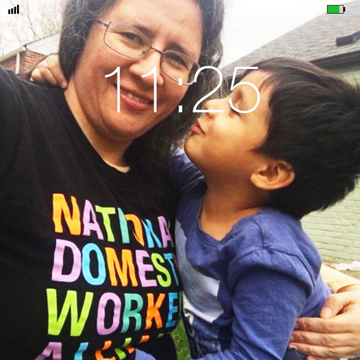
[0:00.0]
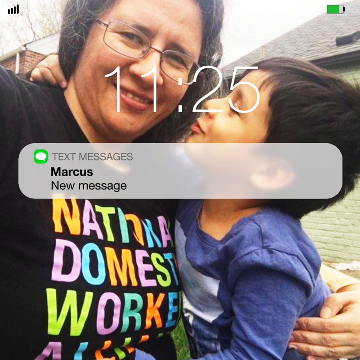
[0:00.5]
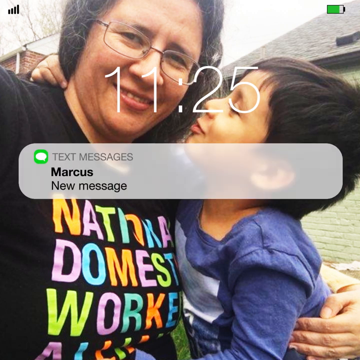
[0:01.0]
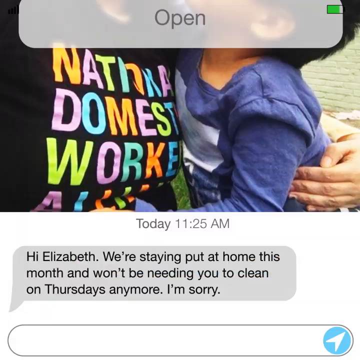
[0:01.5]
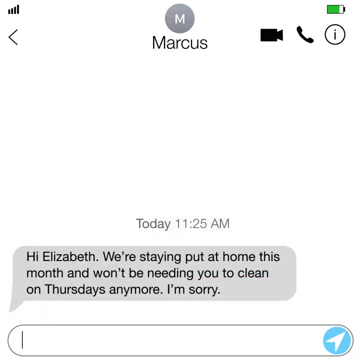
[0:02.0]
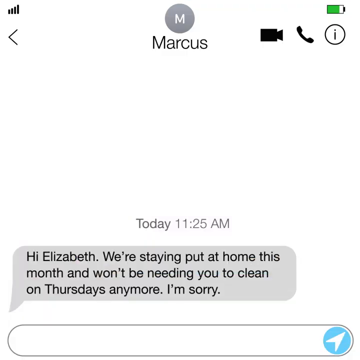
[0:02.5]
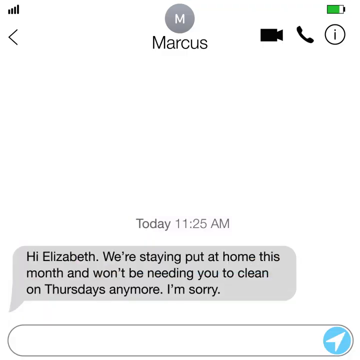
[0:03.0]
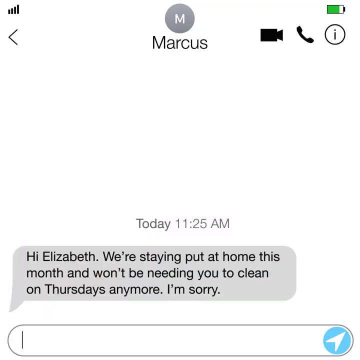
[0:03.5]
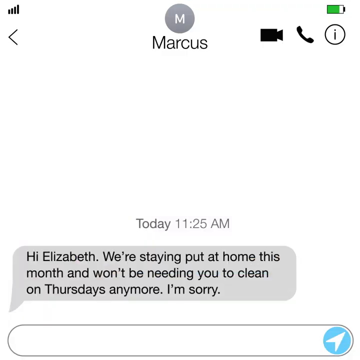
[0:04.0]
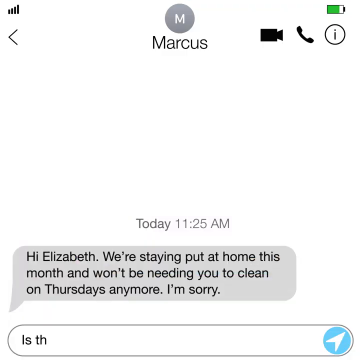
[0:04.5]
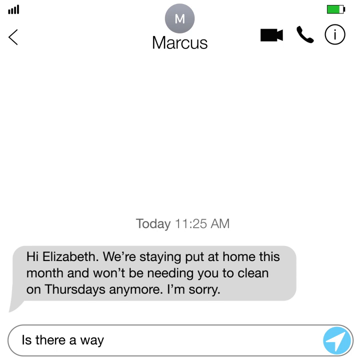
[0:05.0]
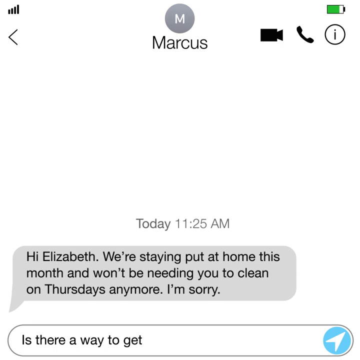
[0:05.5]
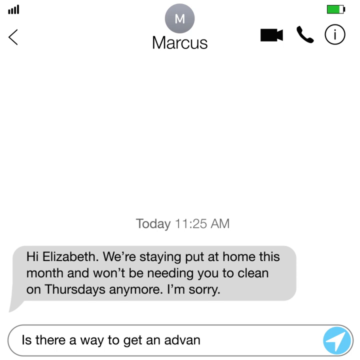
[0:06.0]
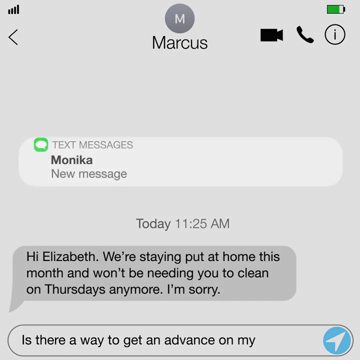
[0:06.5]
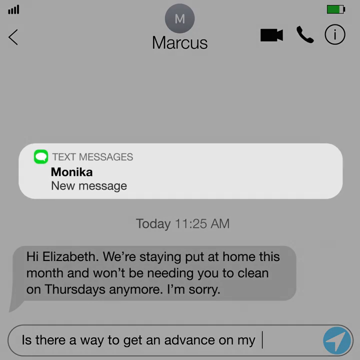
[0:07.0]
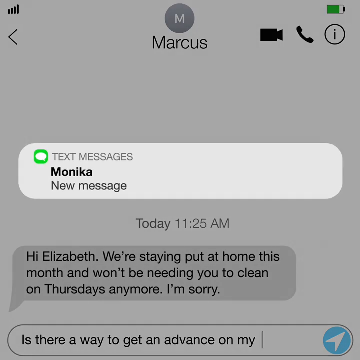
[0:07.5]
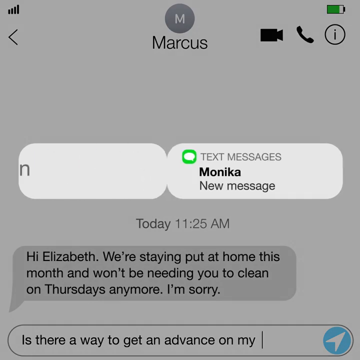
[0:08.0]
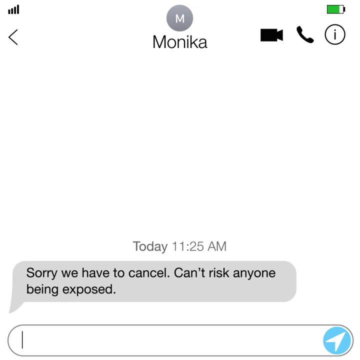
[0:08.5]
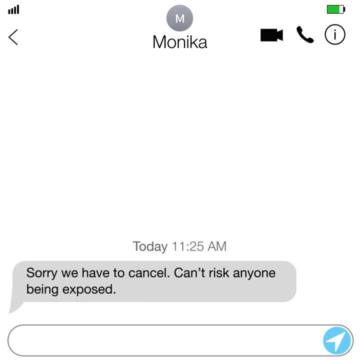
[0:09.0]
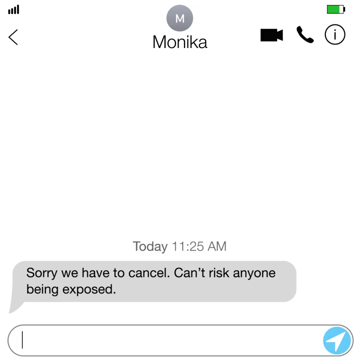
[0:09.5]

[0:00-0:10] Two people stand directly in front of the camera. One is an elderly woman of Hispanic descent with gray hair and glasses, wearing a black shirt with text on the front in rainbow colors, including orange, purple, green and blue. She holds a small child, also of Hispanic descent, who wears a blue shirt with a silver vinyl symbol on the front. The two of them are embracing. They are in the backyard of a house, and the season is winter. The sky is a very bright white, and there is a leafless tree behind two houses. A red brick house is behind the two people, and there is also a second brick house, which is green.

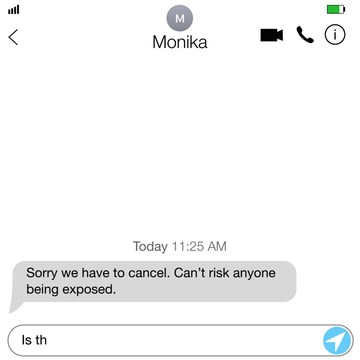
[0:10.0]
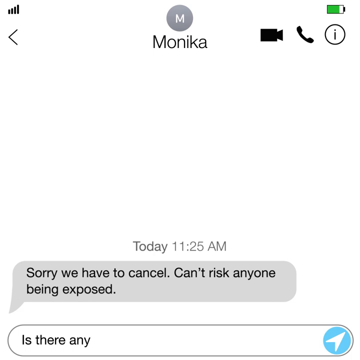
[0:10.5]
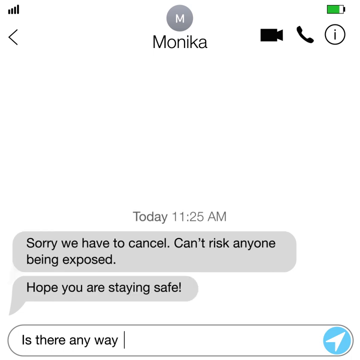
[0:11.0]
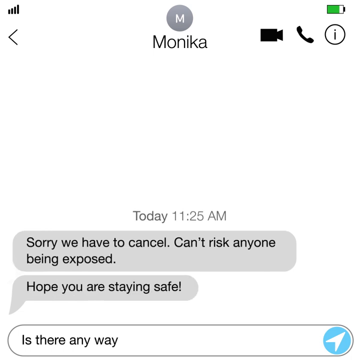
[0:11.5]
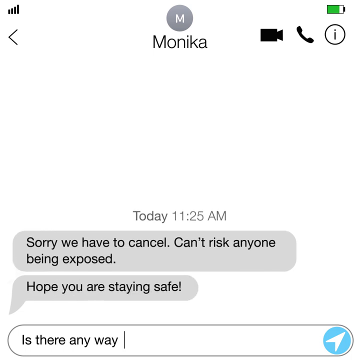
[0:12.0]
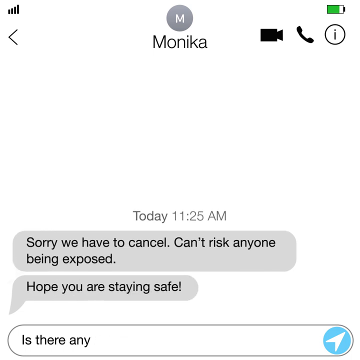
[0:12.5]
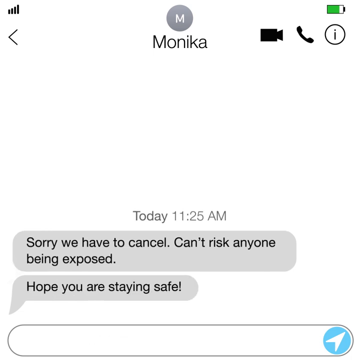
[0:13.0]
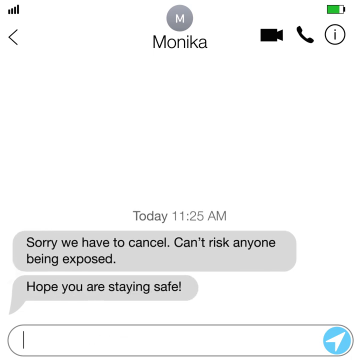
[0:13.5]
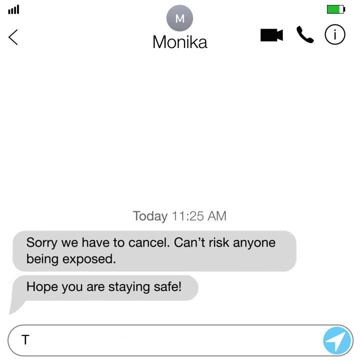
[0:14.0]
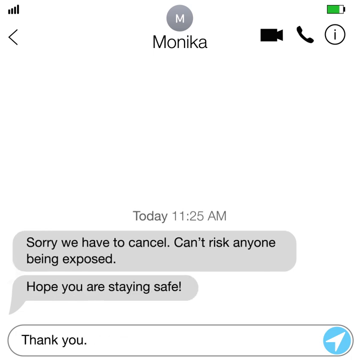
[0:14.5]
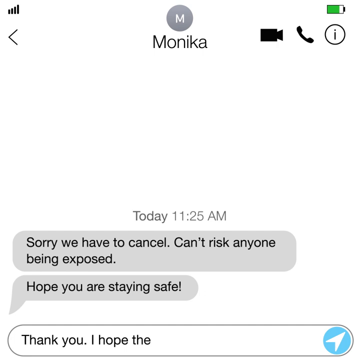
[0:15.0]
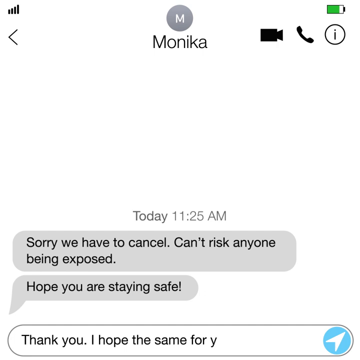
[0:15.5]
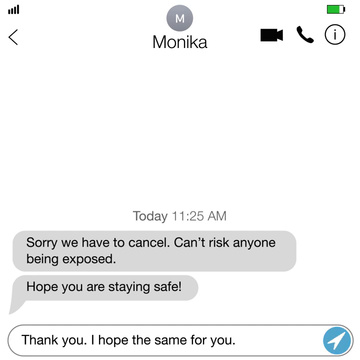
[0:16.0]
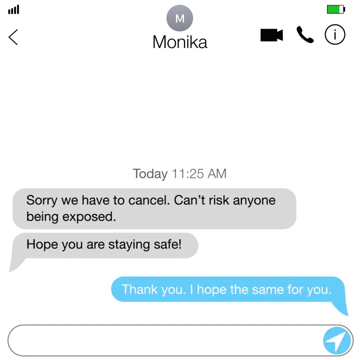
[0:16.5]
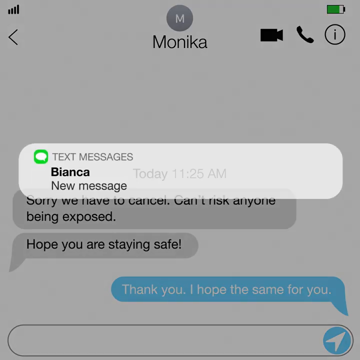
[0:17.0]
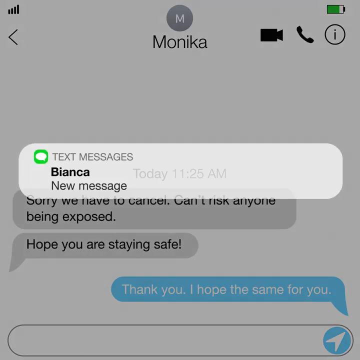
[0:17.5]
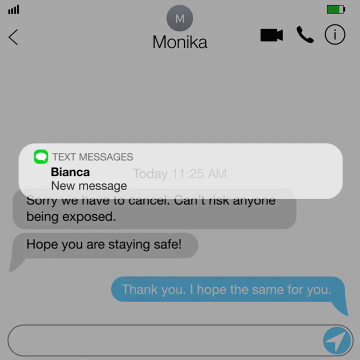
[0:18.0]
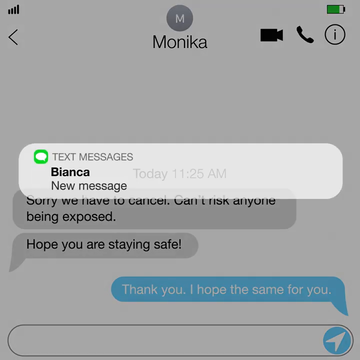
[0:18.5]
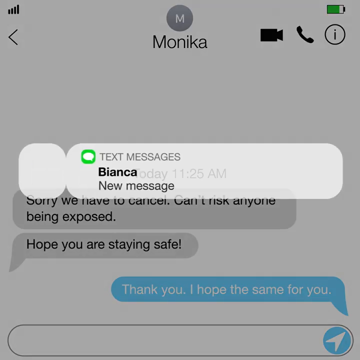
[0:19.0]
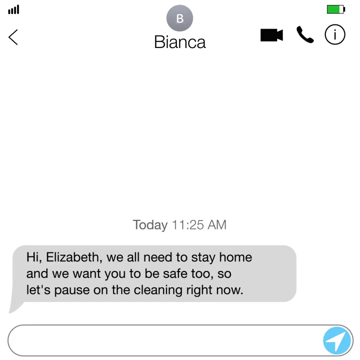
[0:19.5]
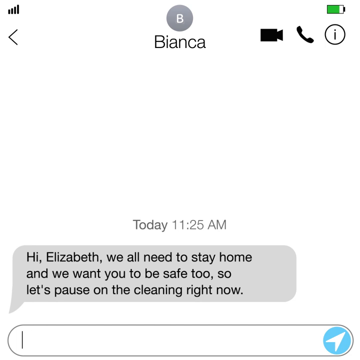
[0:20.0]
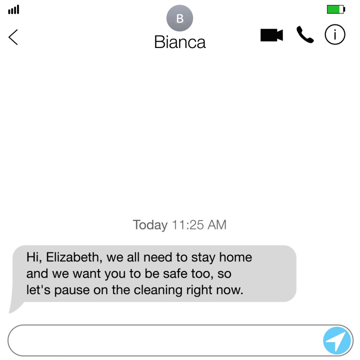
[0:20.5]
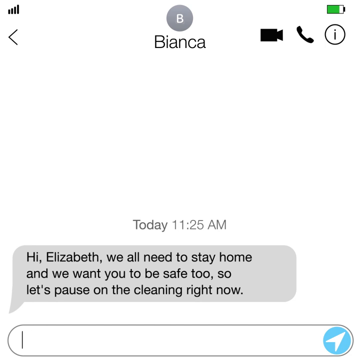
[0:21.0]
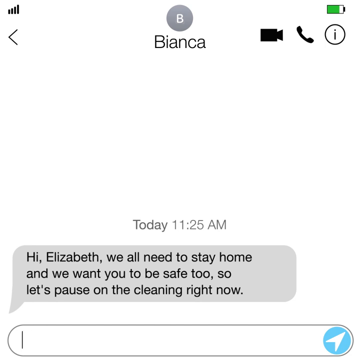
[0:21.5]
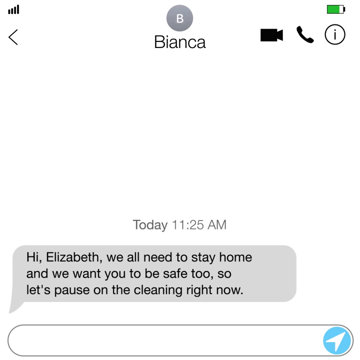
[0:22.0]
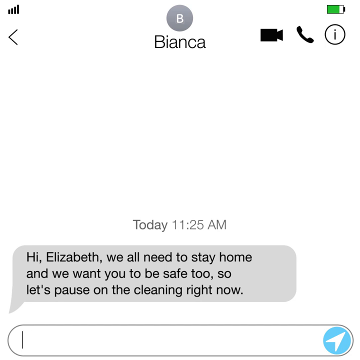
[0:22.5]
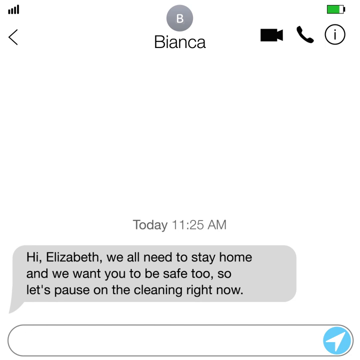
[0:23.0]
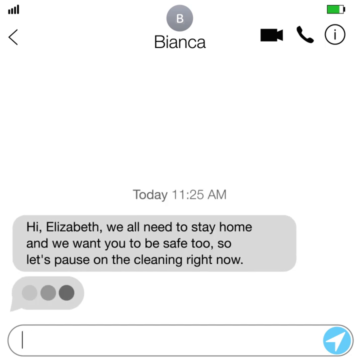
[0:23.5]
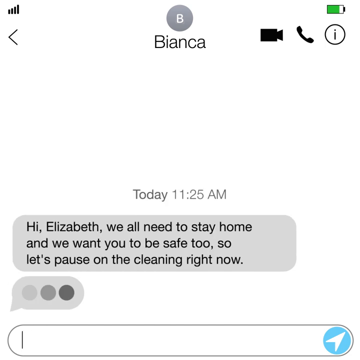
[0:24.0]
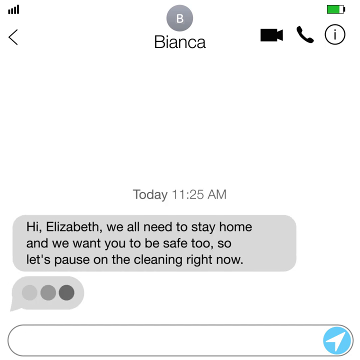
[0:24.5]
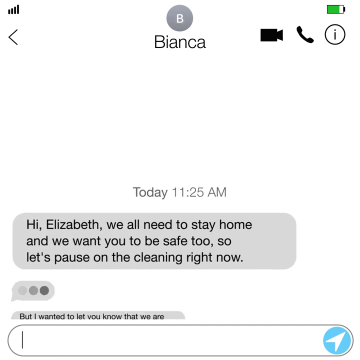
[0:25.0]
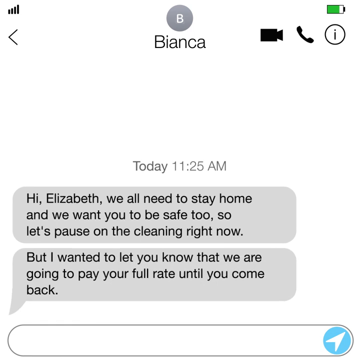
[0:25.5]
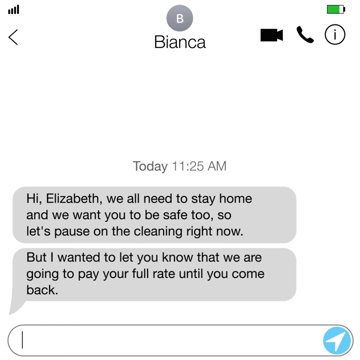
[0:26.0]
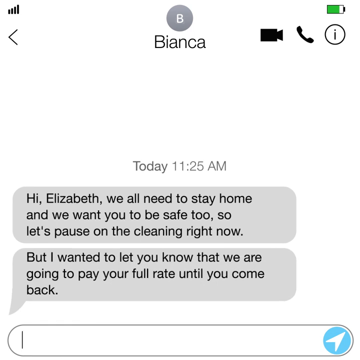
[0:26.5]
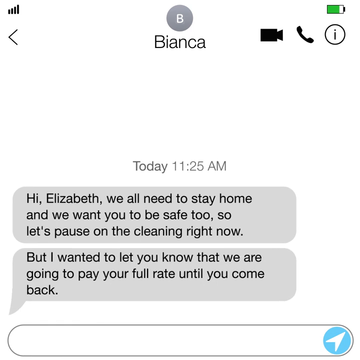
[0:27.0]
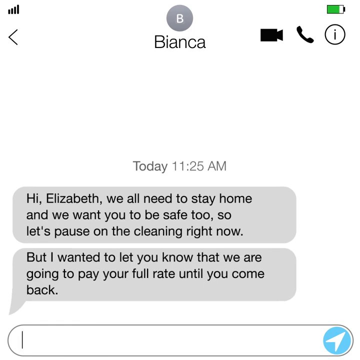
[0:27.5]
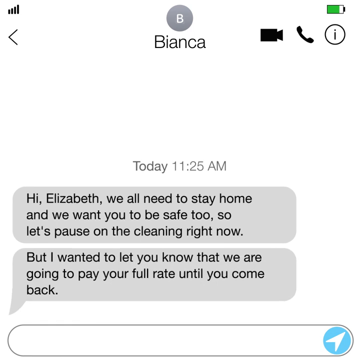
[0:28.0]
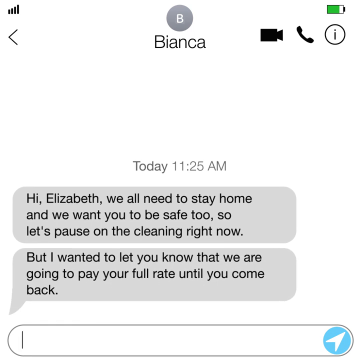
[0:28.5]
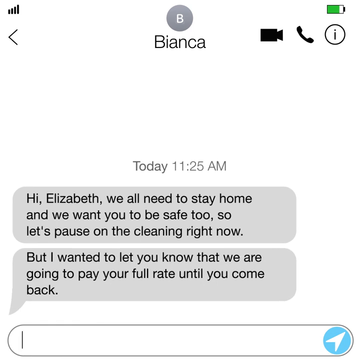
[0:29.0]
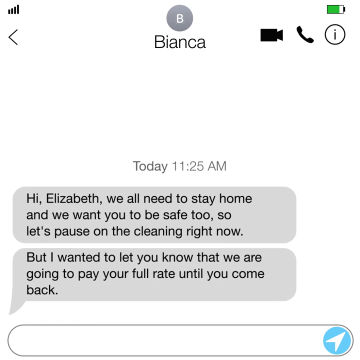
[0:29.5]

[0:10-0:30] A blank white phone screen appears, with text around its borders. A reception symbol is in the top left corner. In the middle of the top of the screen is a gray circle with a white "M", and beneath it is "Monica". To the right are an all-black camera symbol and an all-black phone symbol, and a battery indicator, green with black outlines, shows the battery is mostly full. At the bottom, gray text reads "today 11:25 a.m.", and beneath it is a gray text bubble with black text reading "sorry we have to cancel can't risk anyone being exposed".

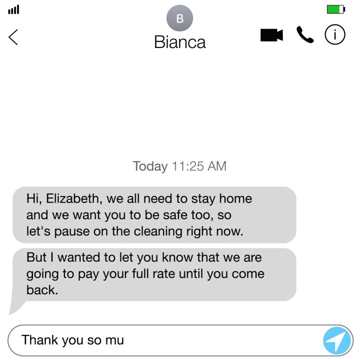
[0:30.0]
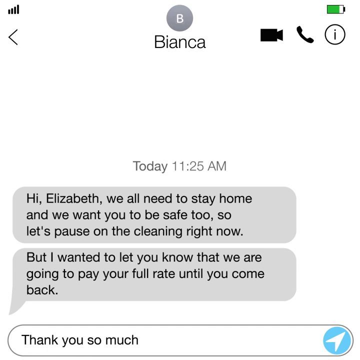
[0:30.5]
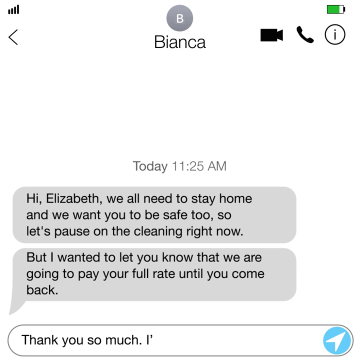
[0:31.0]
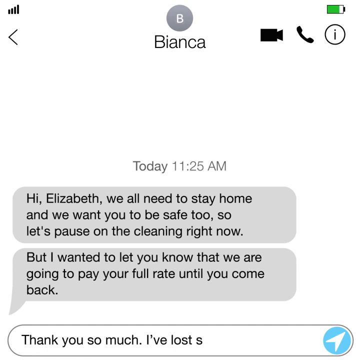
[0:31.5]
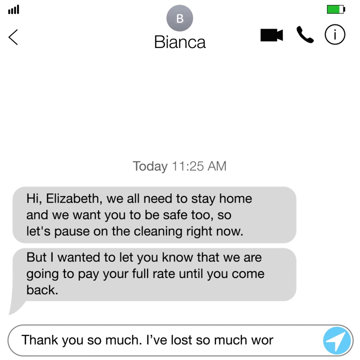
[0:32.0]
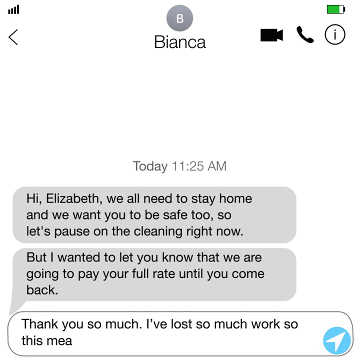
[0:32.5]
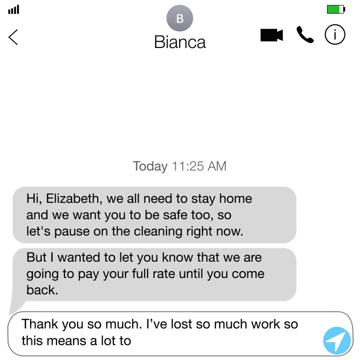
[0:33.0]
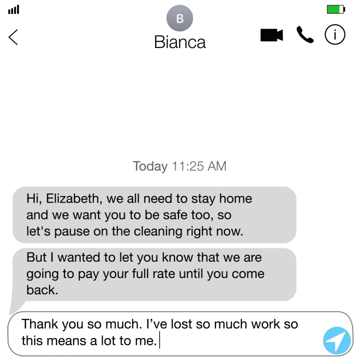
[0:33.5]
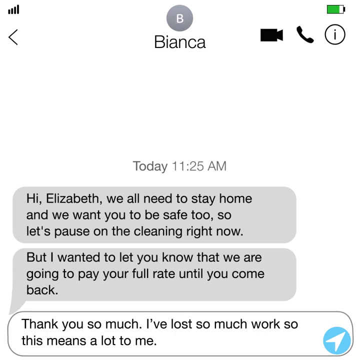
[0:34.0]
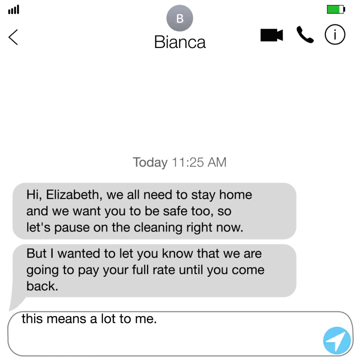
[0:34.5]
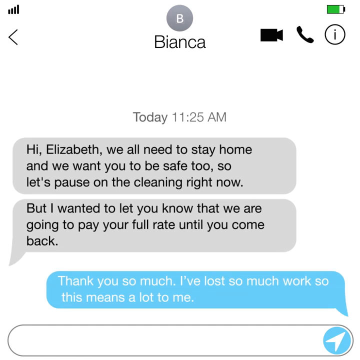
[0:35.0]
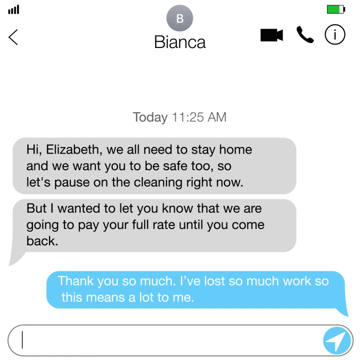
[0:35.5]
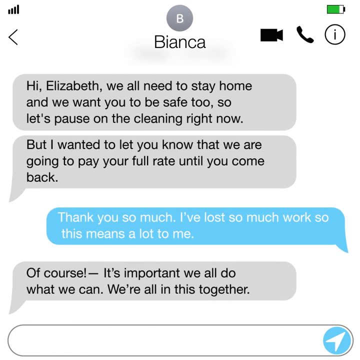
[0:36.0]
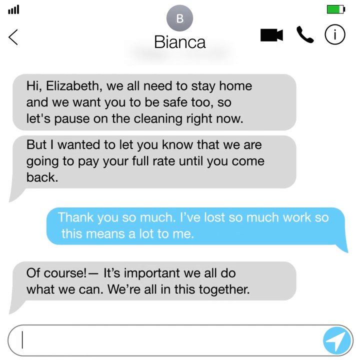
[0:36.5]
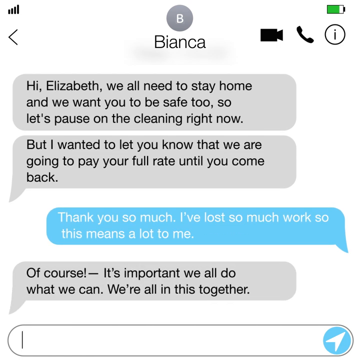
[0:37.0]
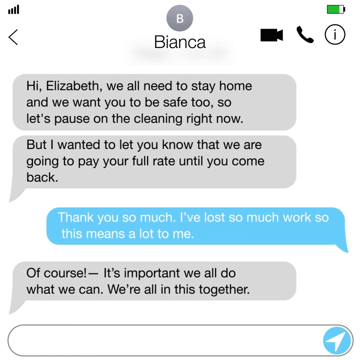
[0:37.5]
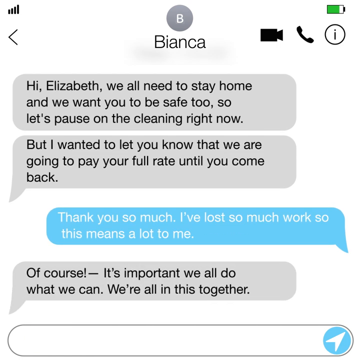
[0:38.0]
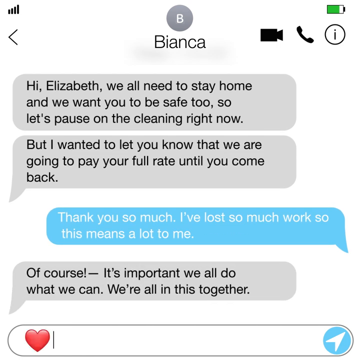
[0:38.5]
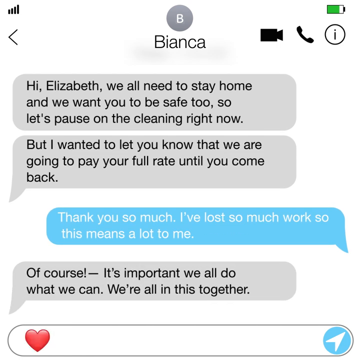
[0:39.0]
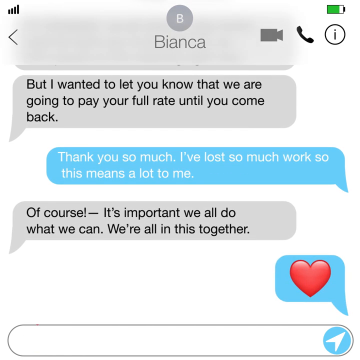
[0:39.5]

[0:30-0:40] The text conversation expands. The gray bubbles at the bottom of the screen have black text; one reads "hi, Elizabeth, we all need to stay home and we want to be safe too. So let's pause on the cleaning right now." A second bubble beneath it reads "but I wanted to let you know that we are going to pay your full rate until you come back." The time is still 11:25 AM, and the background is still white. In the chat box, the user is typing the words "Thank you so much. I've lost so much work. So this means a lot to me."